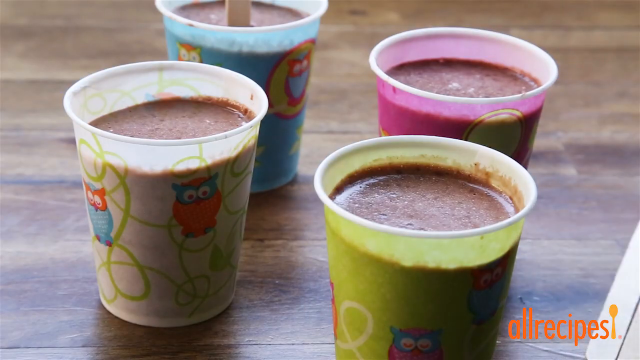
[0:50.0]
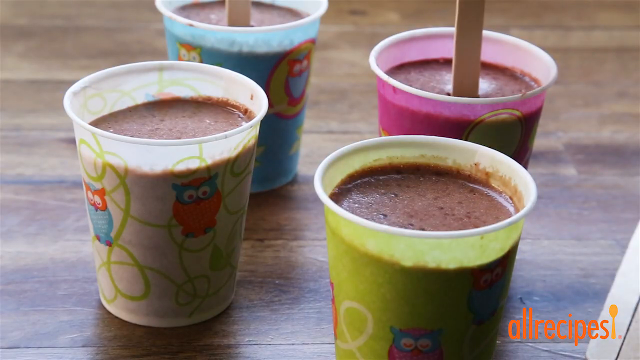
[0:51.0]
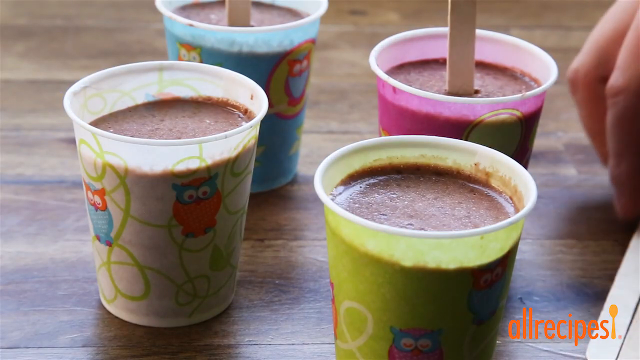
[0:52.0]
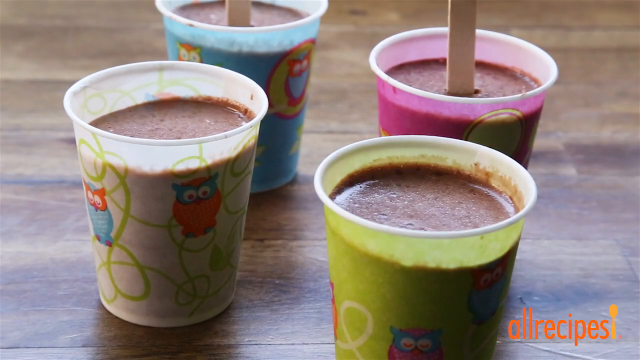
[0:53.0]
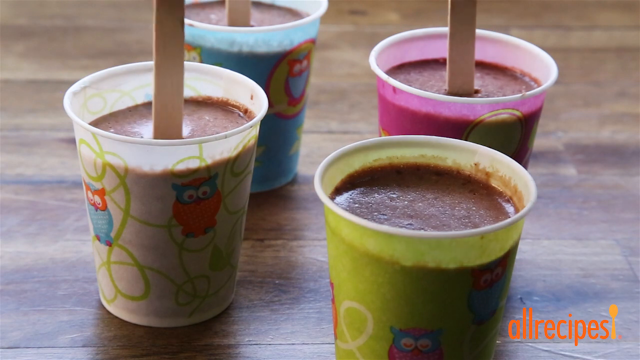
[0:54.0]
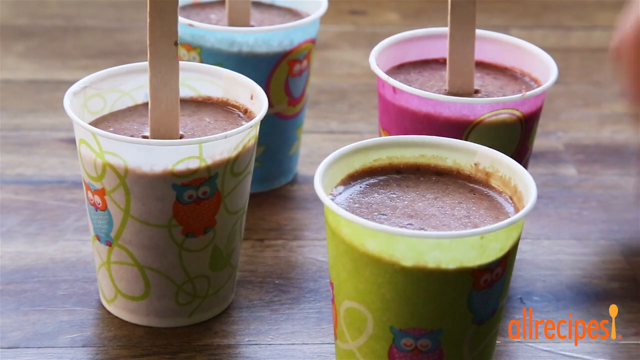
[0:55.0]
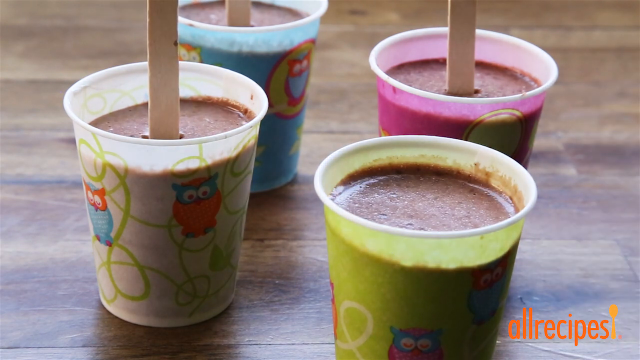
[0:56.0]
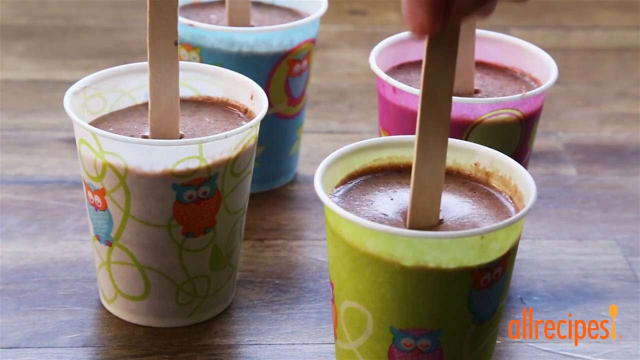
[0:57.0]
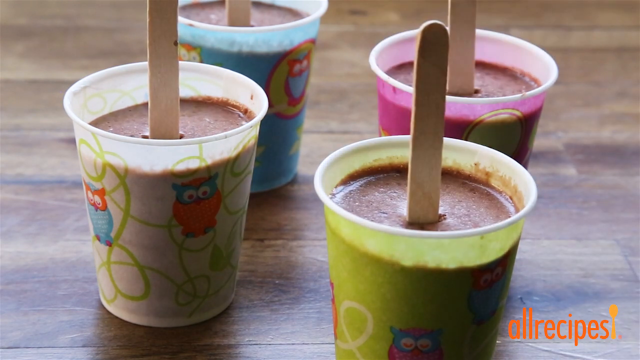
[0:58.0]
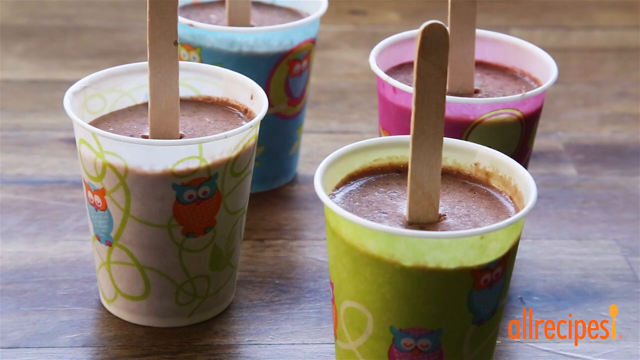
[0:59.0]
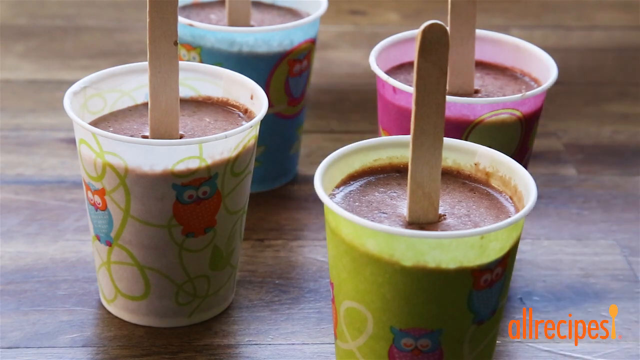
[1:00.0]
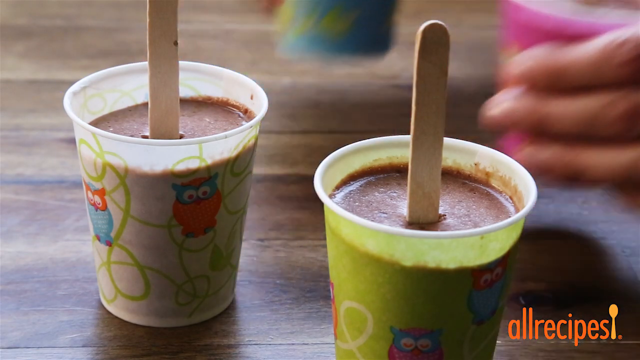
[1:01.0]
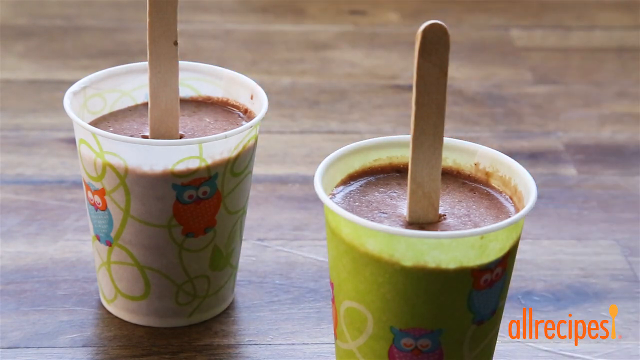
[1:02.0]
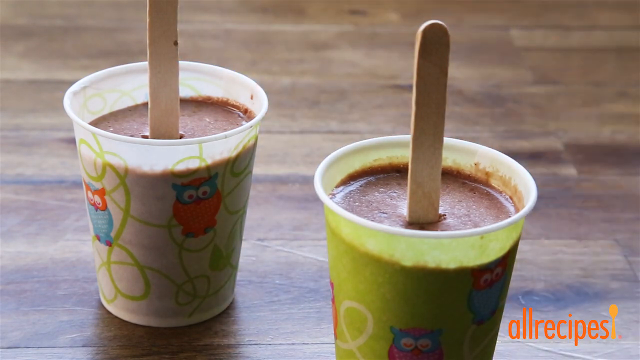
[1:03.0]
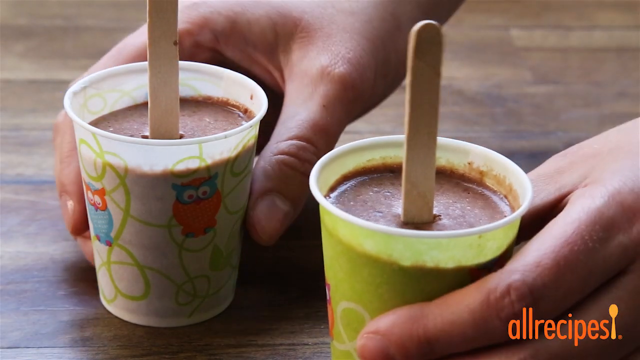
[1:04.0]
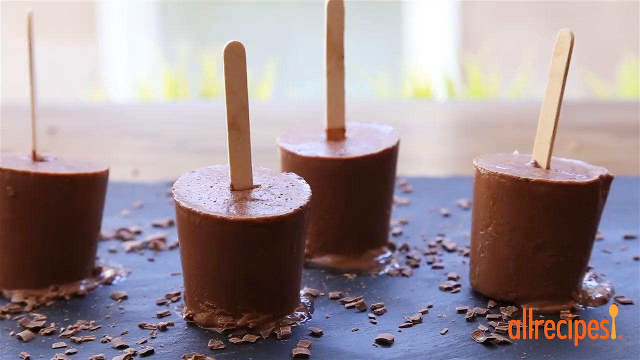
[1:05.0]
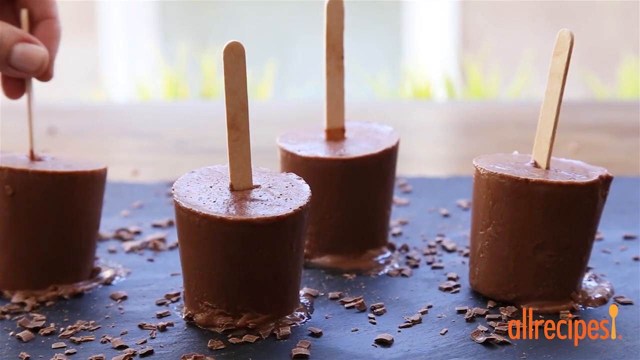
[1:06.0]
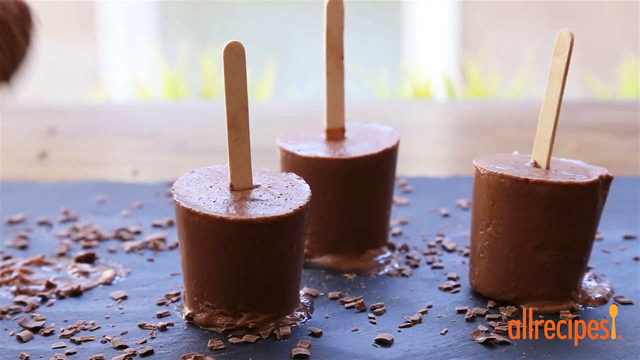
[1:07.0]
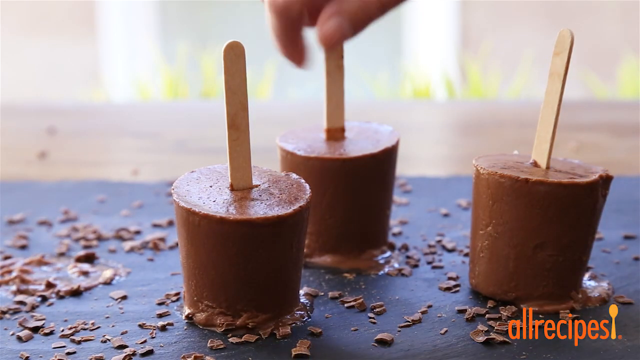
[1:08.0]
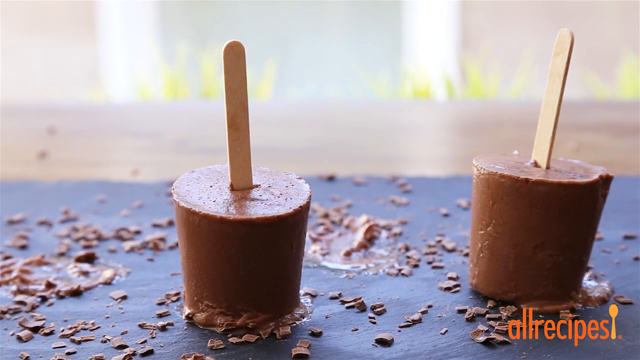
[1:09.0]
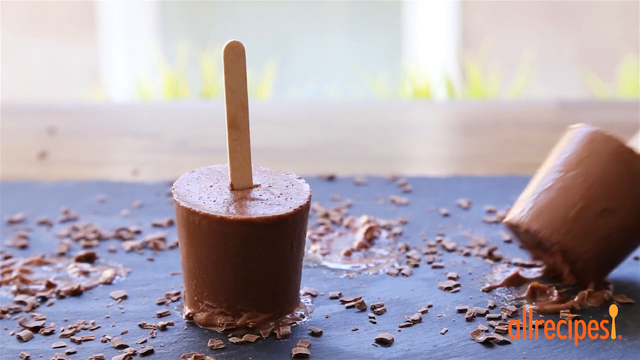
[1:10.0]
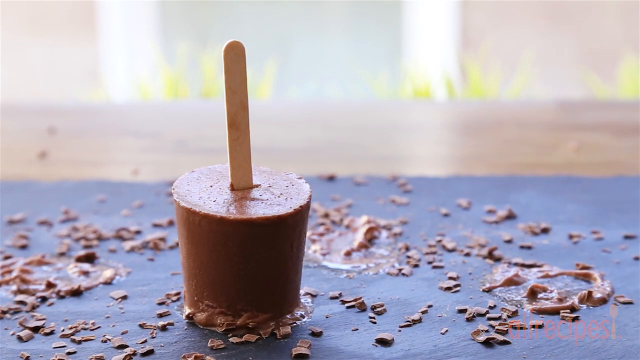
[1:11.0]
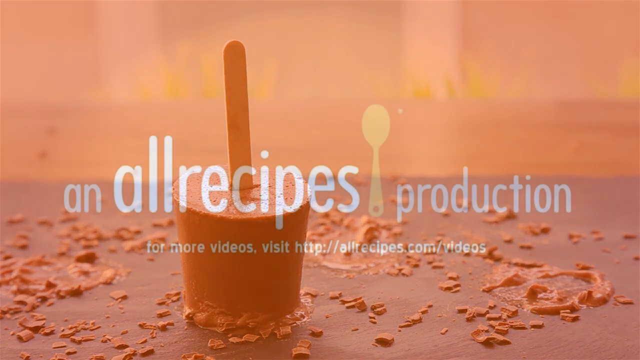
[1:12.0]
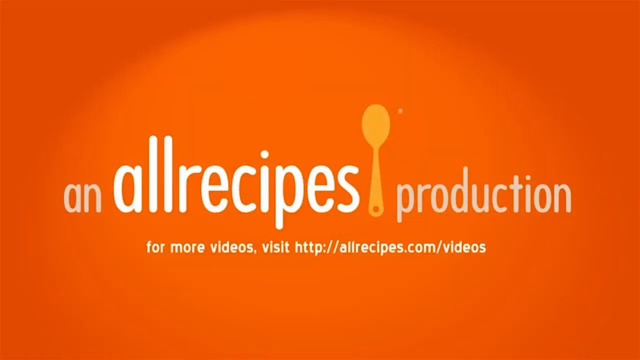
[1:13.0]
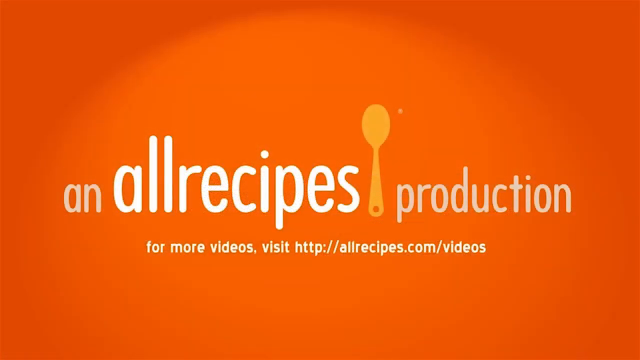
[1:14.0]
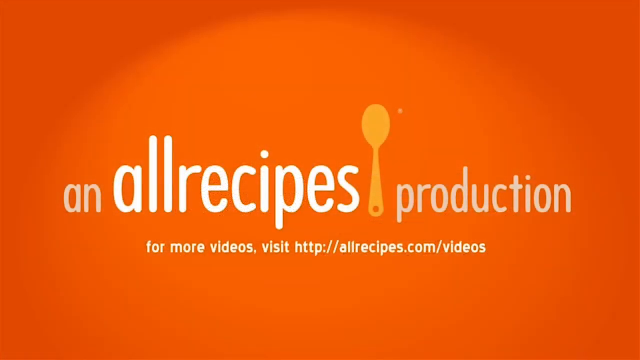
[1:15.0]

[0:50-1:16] In a close-up, little paper cups with little cartoon owls on them, in different colors such as green, blue and pink, hold a brown liquid, and popsicle sticks are put into them. A hand on the right picks up a popsicle stick and places it in the white cup on the left-hand side; the last stick goes into the green cup at the bottom right. Two hands grab the blue and pink cups and pull them off camera to the right, then come back and grab the white and green ones as well. A close-up then shows what looks like the finished result: four little brown popsicles with popsicle sticks sticking out of them. A hand on the left-hand side of the frame pulls the leftmost popsicle away, then pulls the third from the left off the right-hand side of the frame, then the rightmost one. Finally, an orange screen shows white text reading "in all recipes production for more videos visit http://all recipes.com/videos".